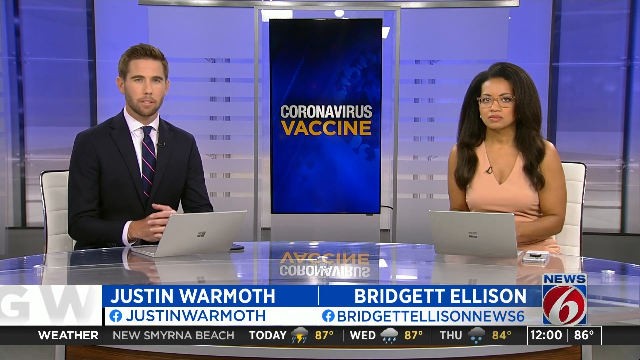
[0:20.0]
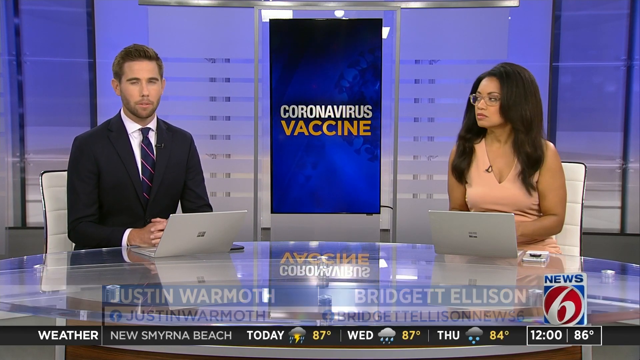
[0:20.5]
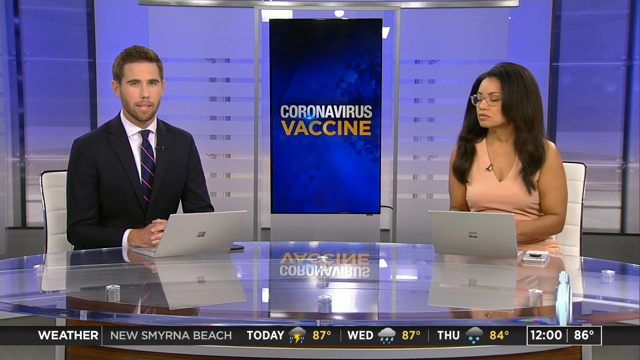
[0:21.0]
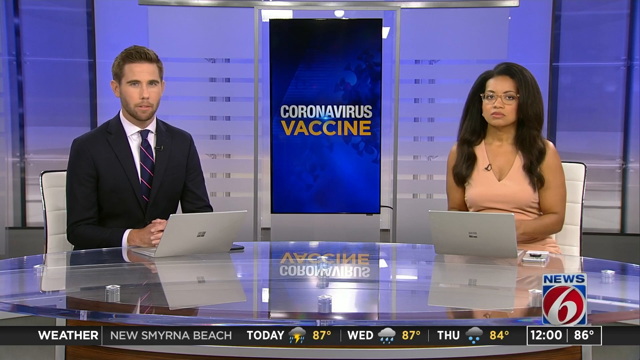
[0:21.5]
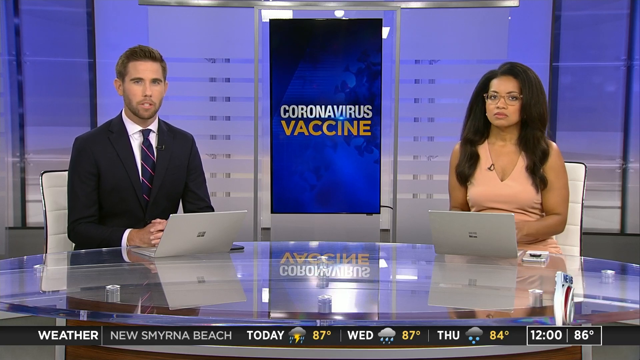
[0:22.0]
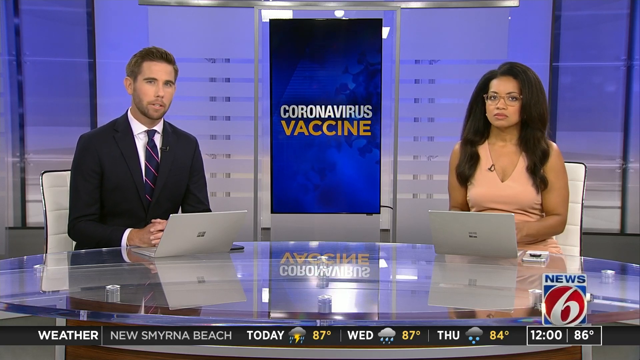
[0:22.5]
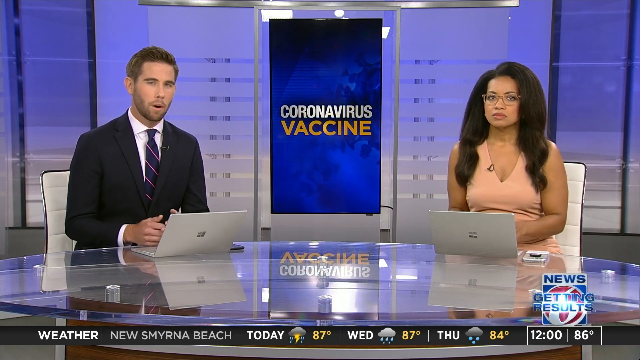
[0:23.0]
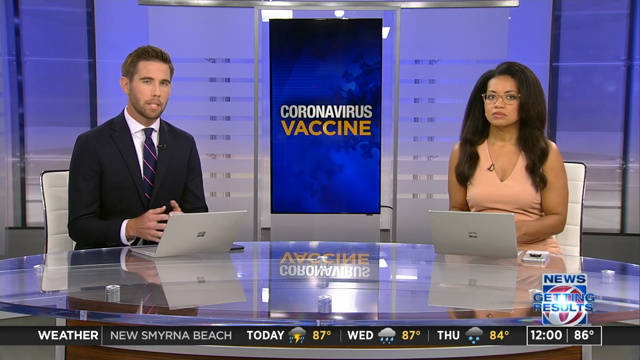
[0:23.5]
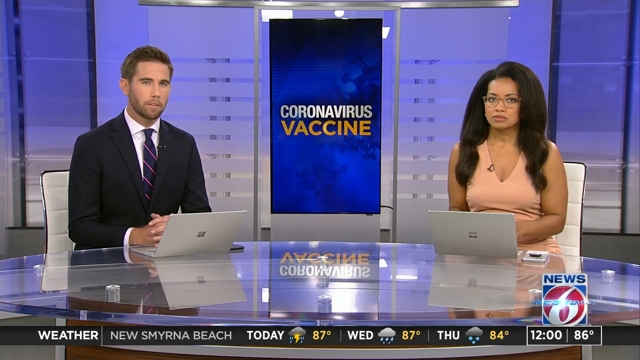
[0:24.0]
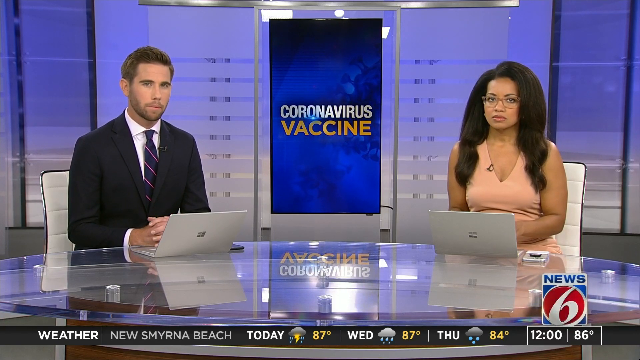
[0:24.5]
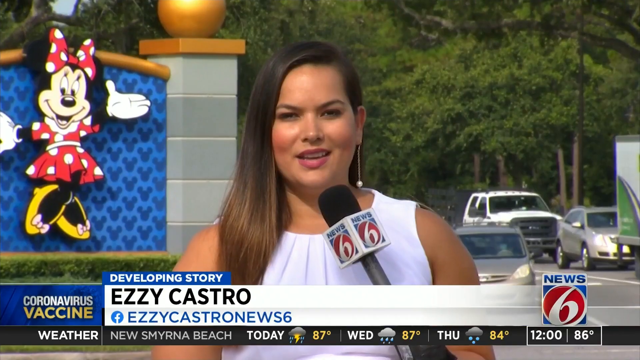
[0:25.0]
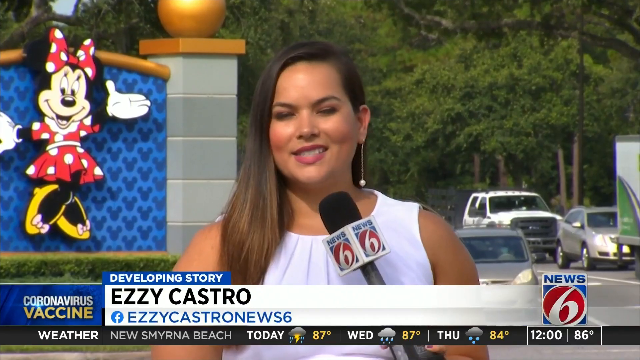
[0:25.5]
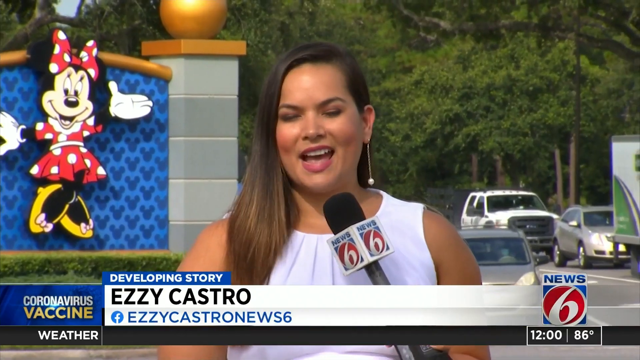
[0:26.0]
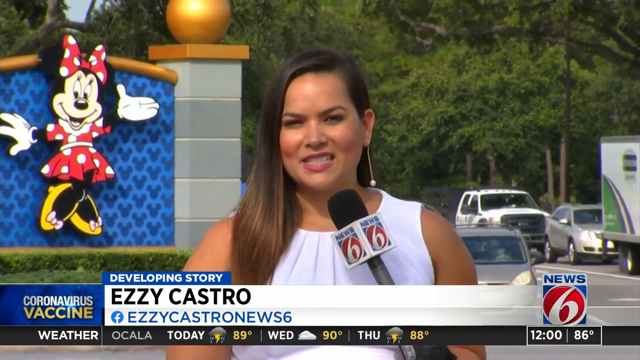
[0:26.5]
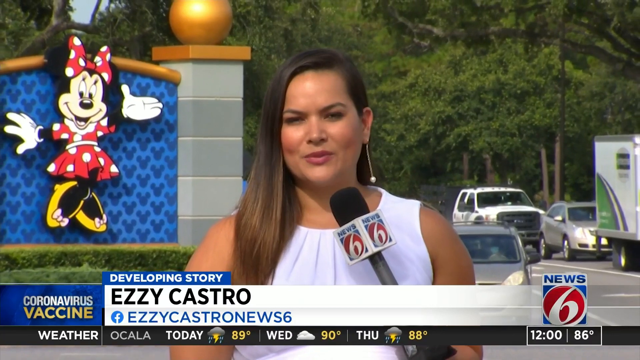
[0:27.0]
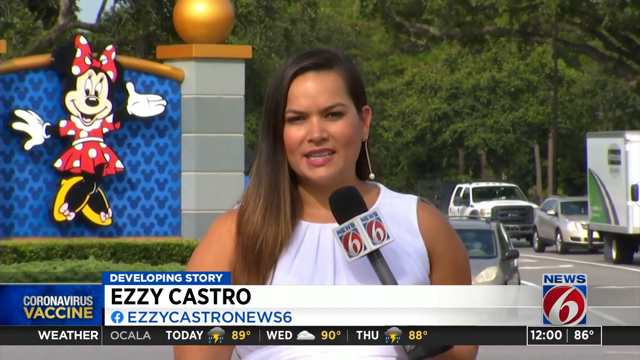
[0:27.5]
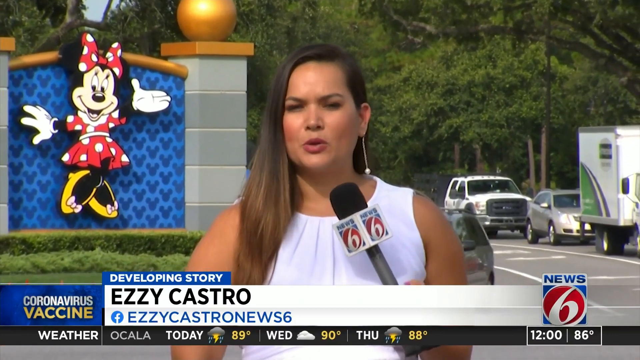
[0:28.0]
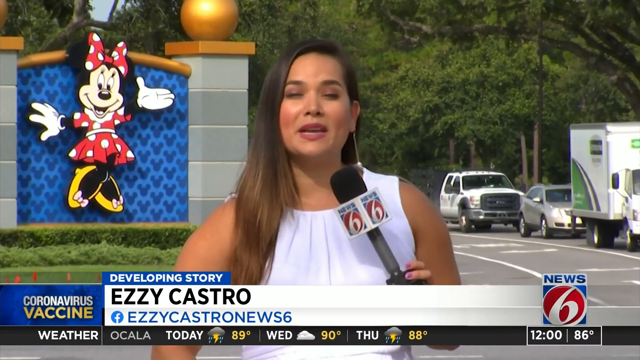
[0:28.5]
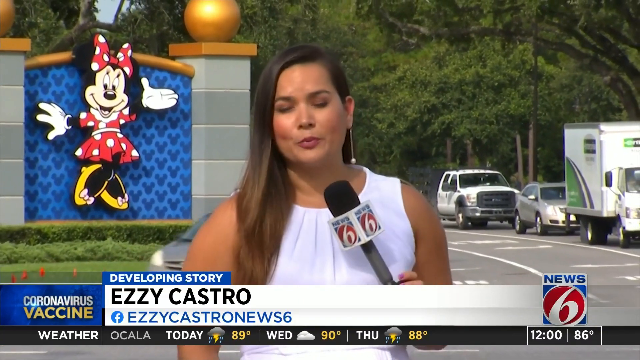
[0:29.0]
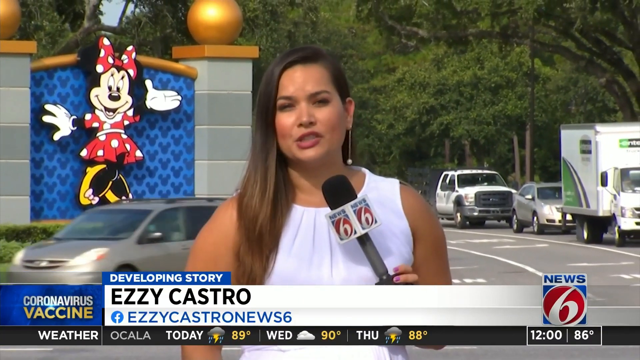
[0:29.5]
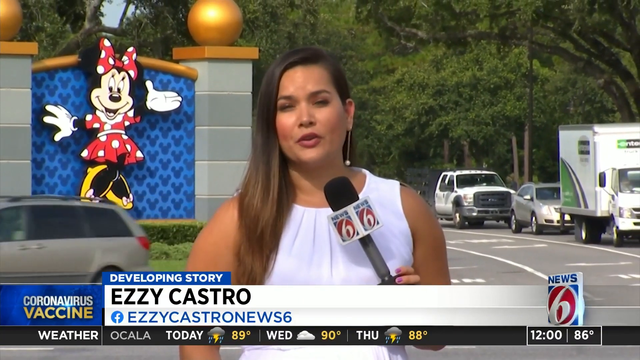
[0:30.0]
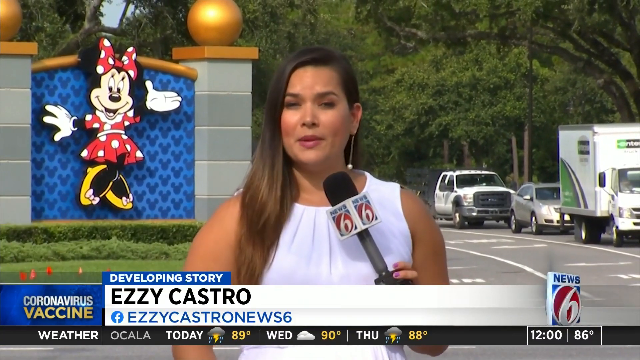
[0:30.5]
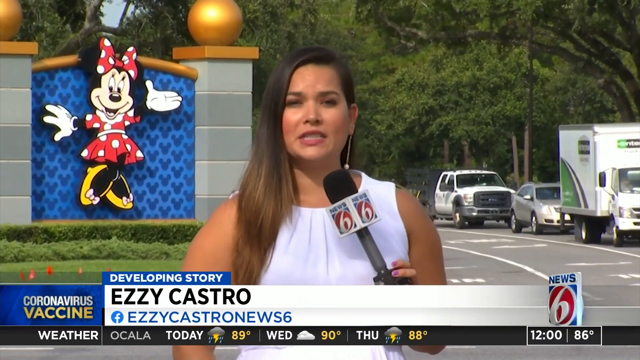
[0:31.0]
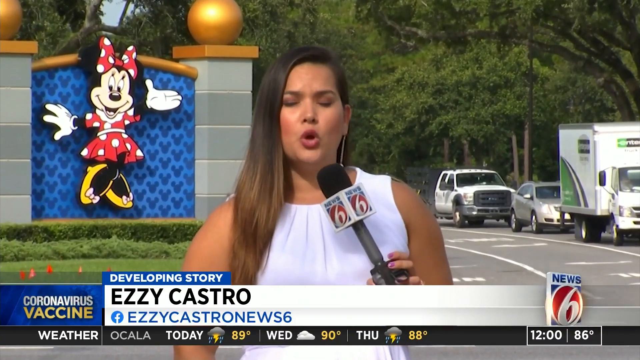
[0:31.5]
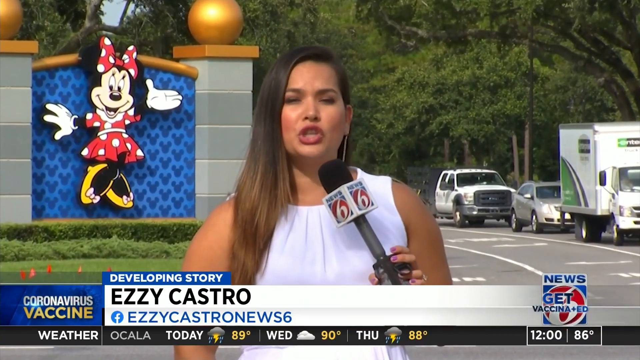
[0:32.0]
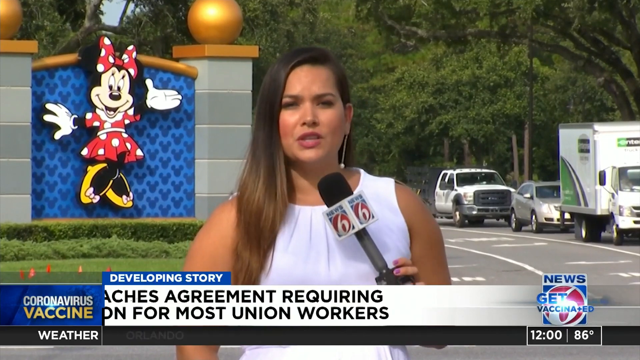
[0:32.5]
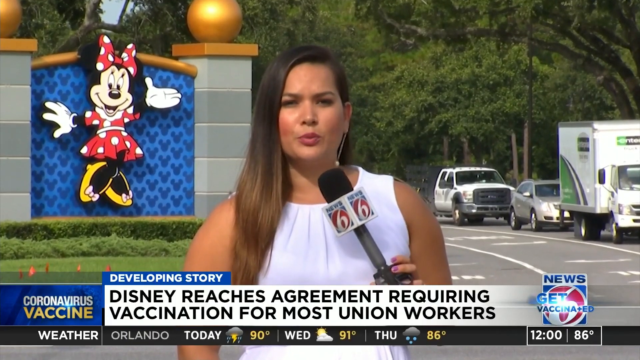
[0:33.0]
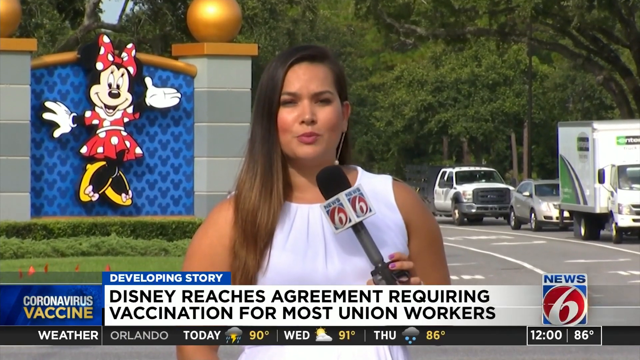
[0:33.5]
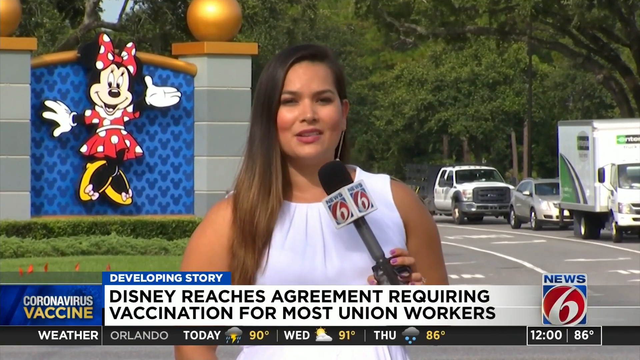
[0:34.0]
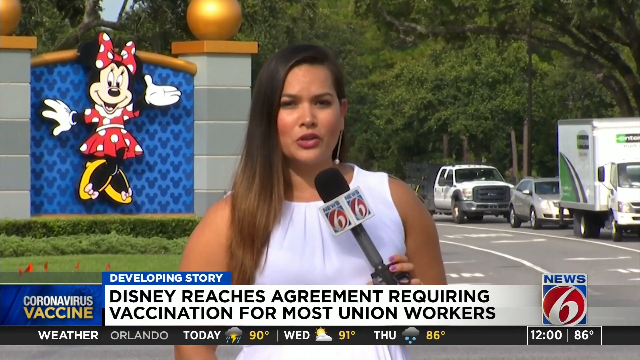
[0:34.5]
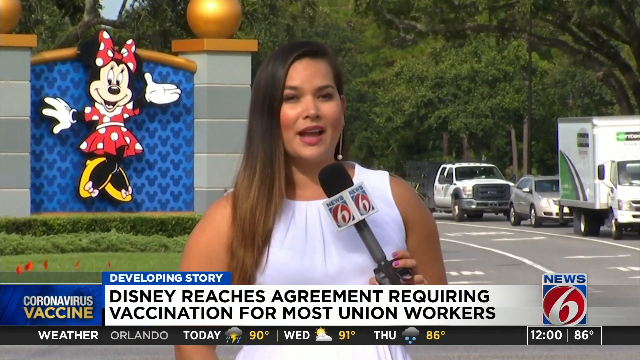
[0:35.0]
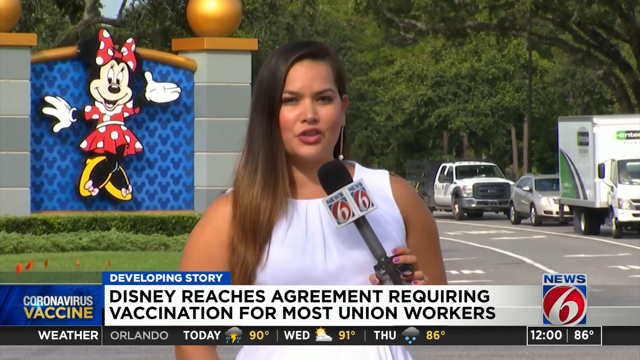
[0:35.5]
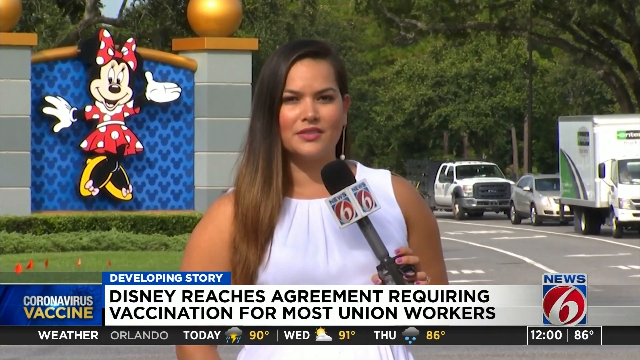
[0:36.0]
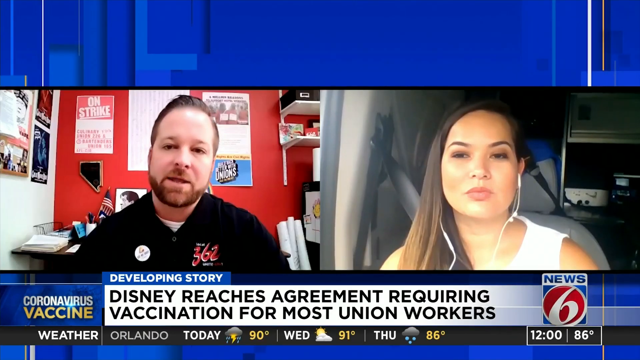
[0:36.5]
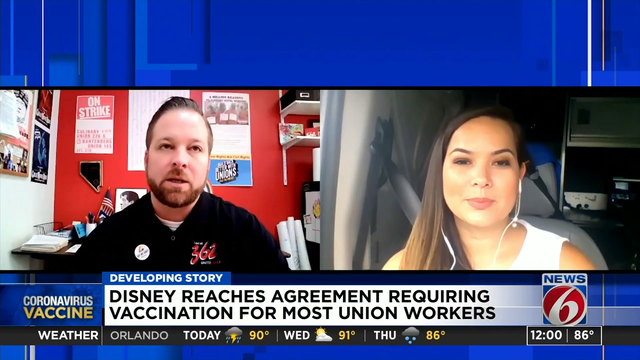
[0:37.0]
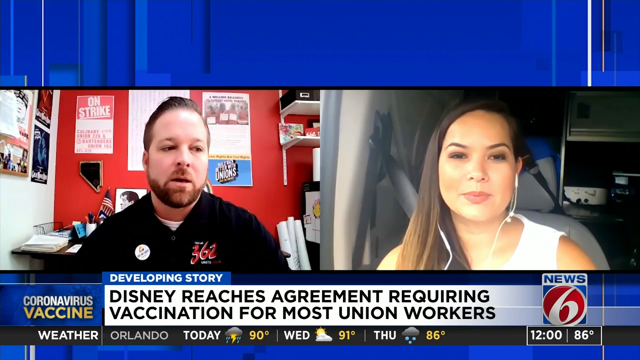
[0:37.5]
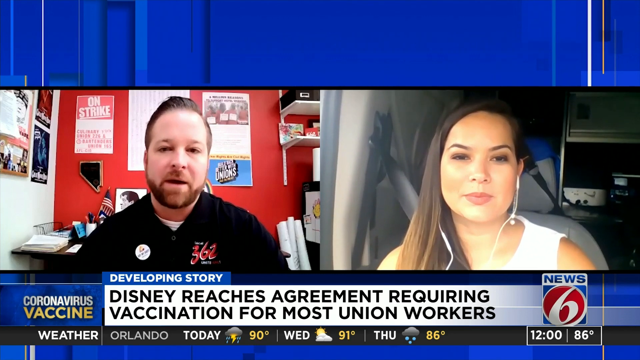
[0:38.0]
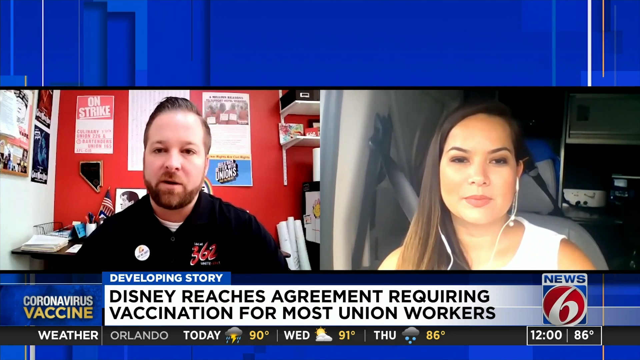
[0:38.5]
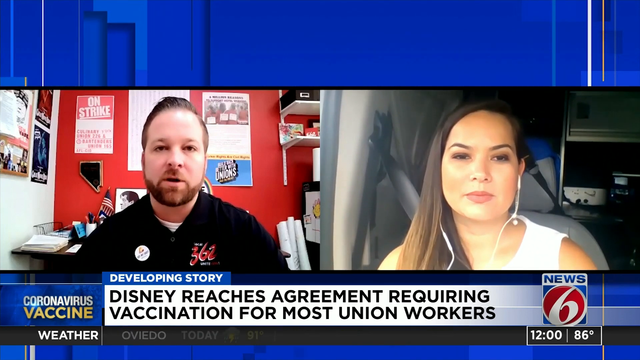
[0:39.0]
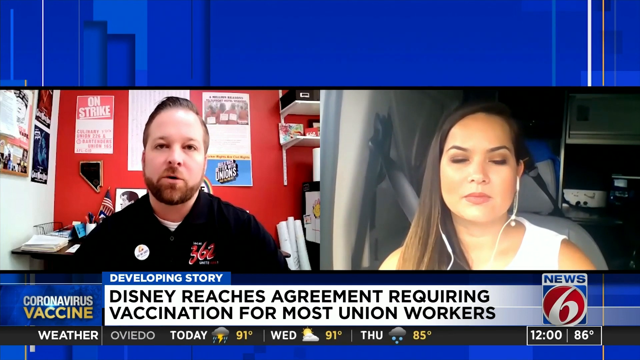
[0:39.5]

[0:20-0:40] The newscasters still sit at the news desk, which is circular, with their very thin laptops in front of them. He wears a black suit, a white shirt and a blue striped tie; she wears a light coral sleeveless dress. The story is a developing story from Disney World, and the screen says "Disney reaches agreement requiring vaccination for most union workers." The report then shows different people who look like they may work at Disney World giving their thoughts on the agreement, including a man in a black polo shirt and a woman with earbuds in.